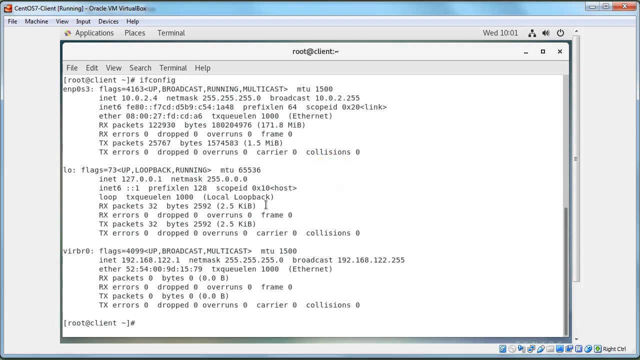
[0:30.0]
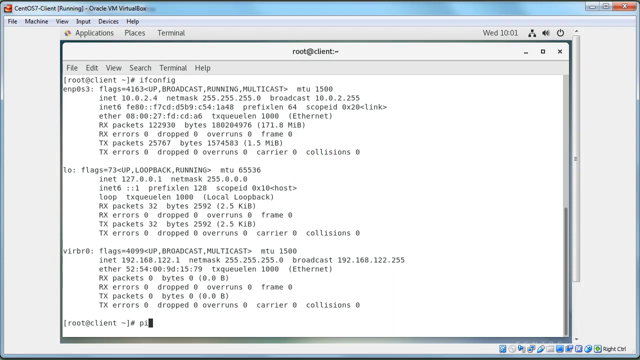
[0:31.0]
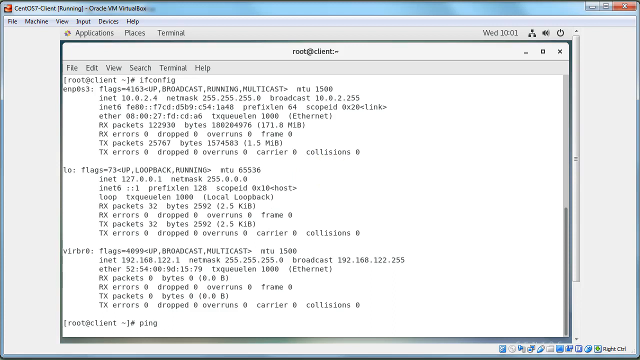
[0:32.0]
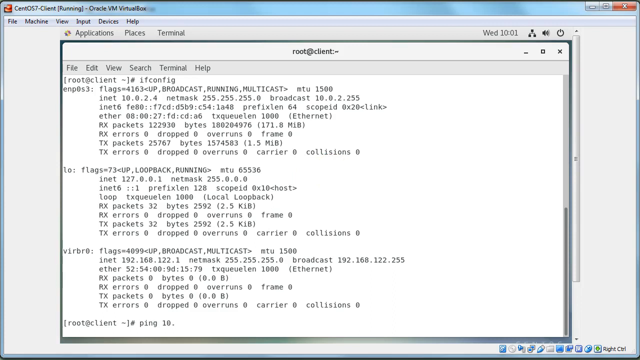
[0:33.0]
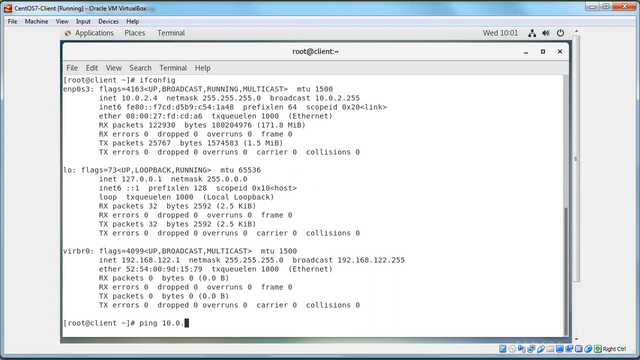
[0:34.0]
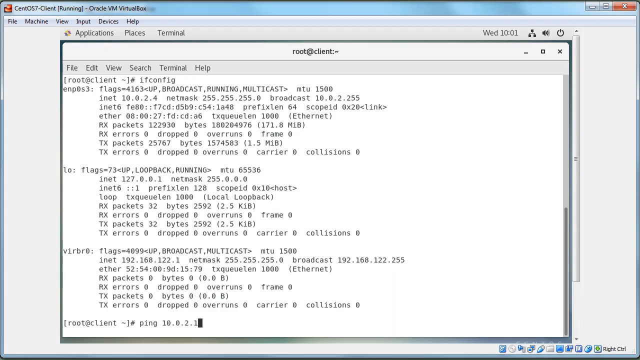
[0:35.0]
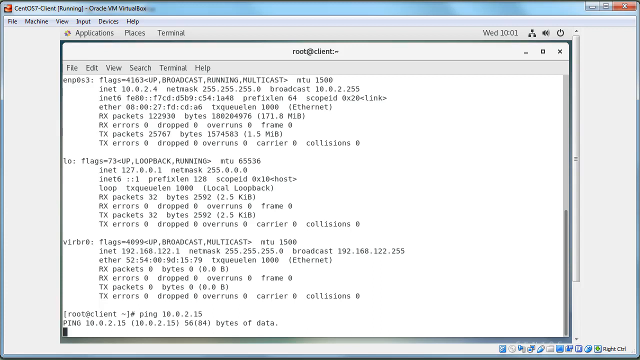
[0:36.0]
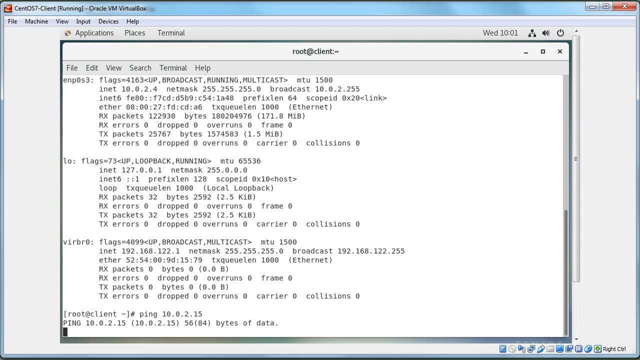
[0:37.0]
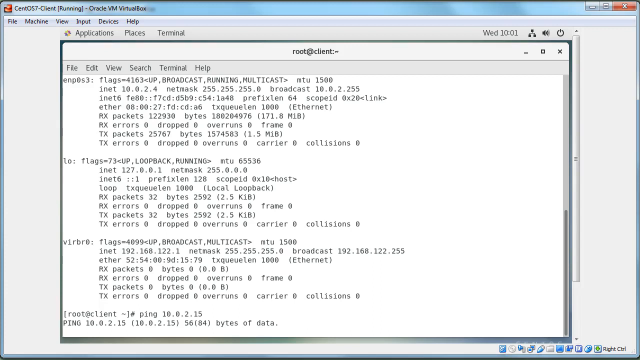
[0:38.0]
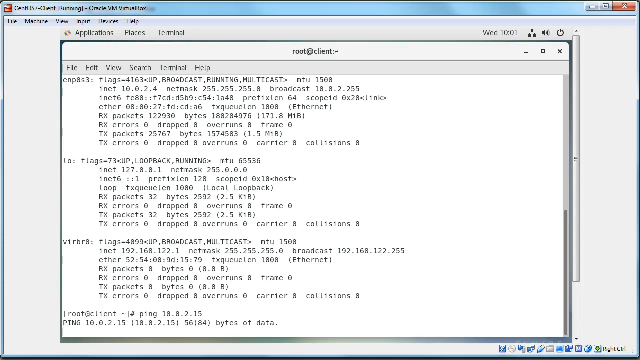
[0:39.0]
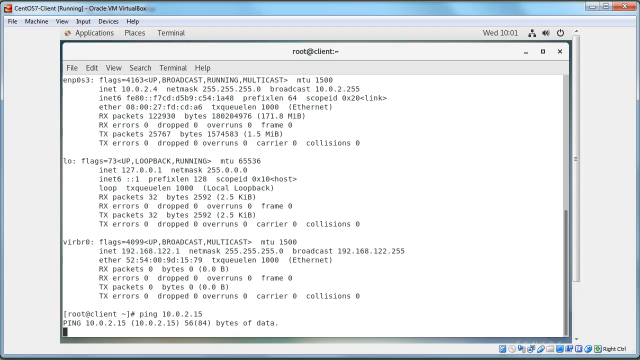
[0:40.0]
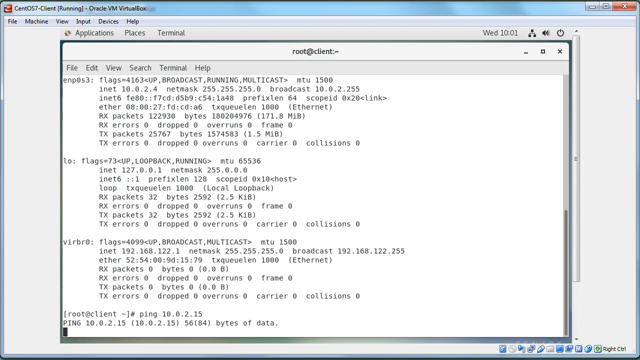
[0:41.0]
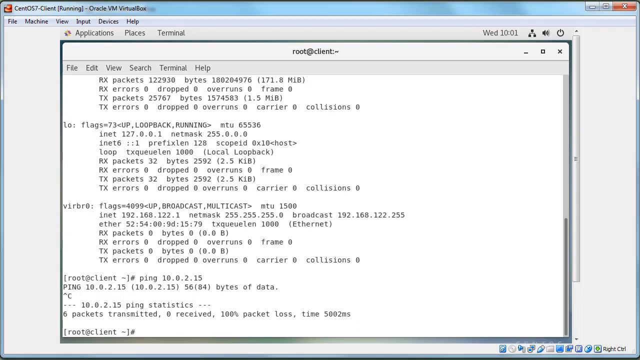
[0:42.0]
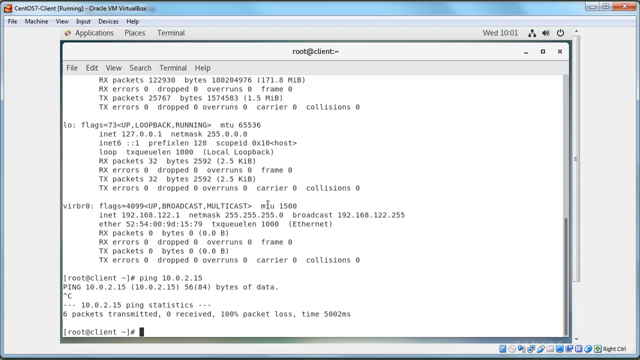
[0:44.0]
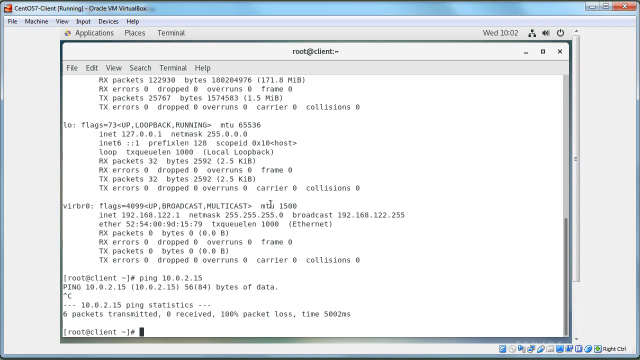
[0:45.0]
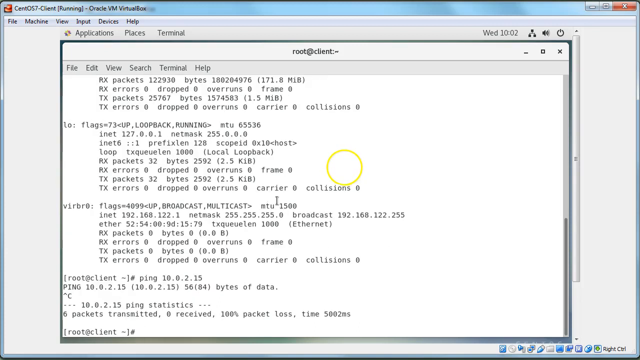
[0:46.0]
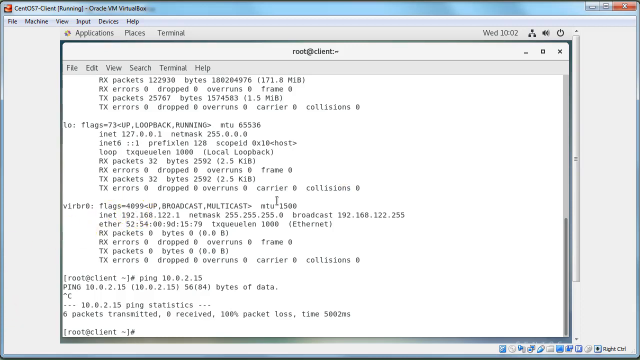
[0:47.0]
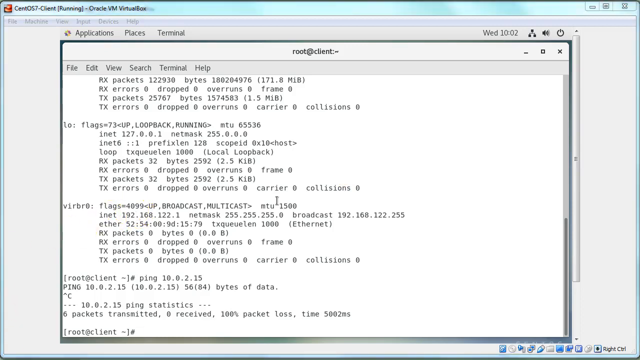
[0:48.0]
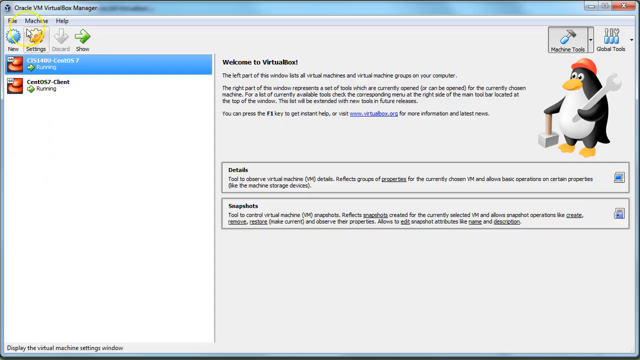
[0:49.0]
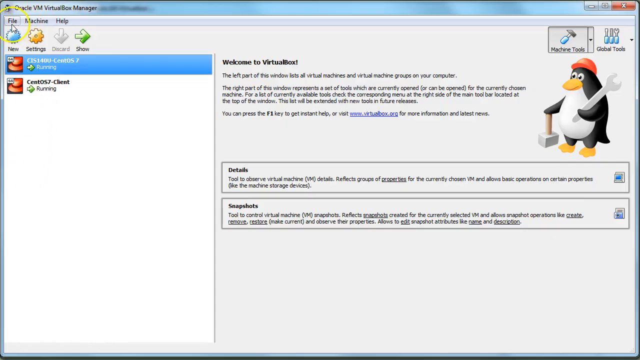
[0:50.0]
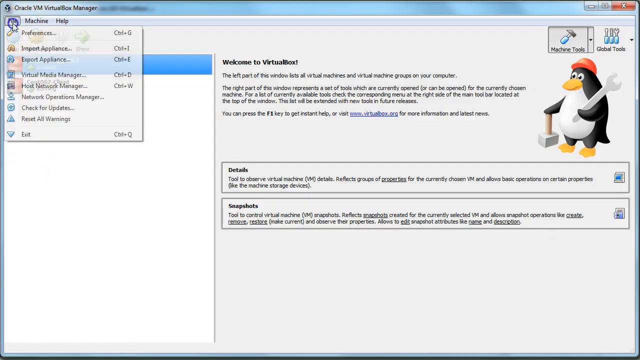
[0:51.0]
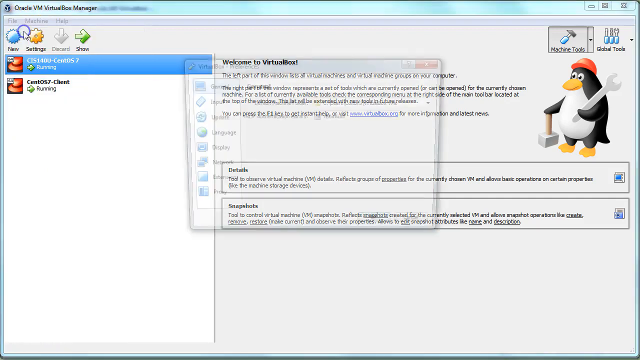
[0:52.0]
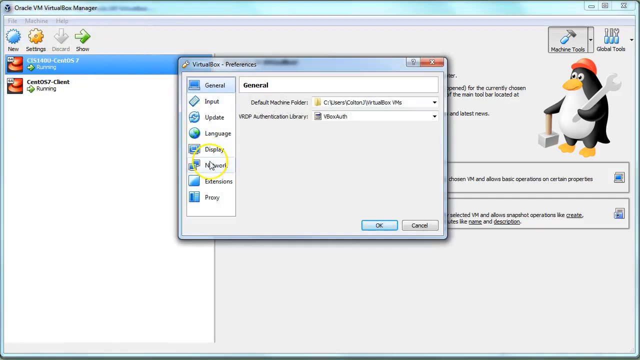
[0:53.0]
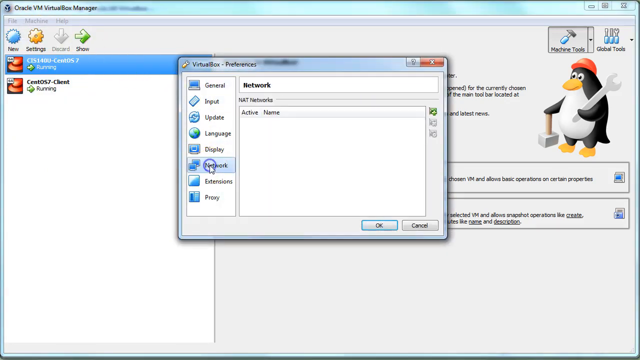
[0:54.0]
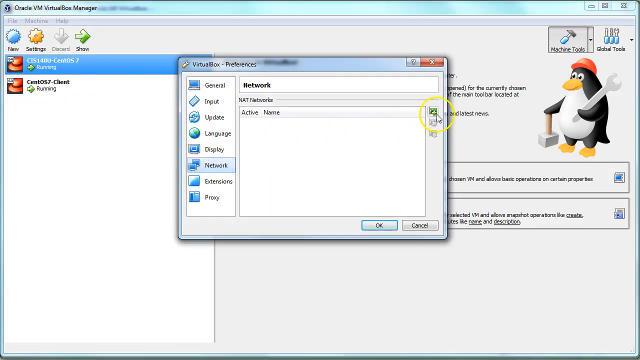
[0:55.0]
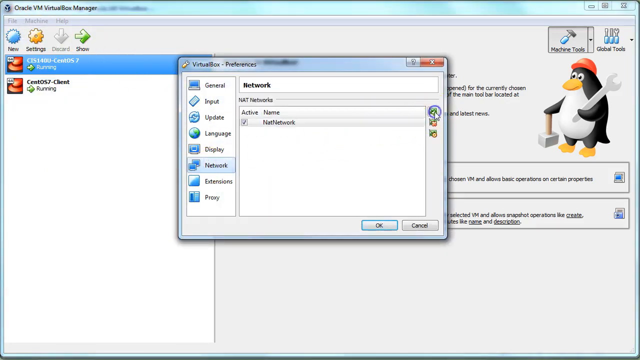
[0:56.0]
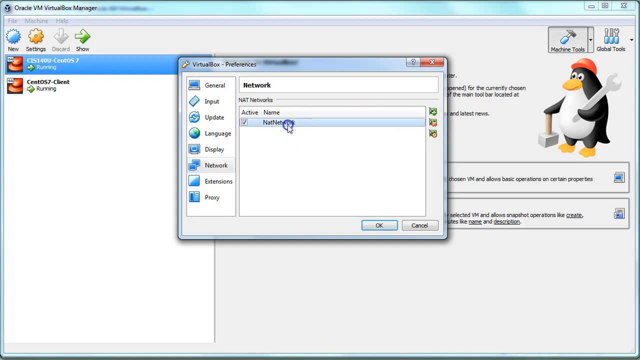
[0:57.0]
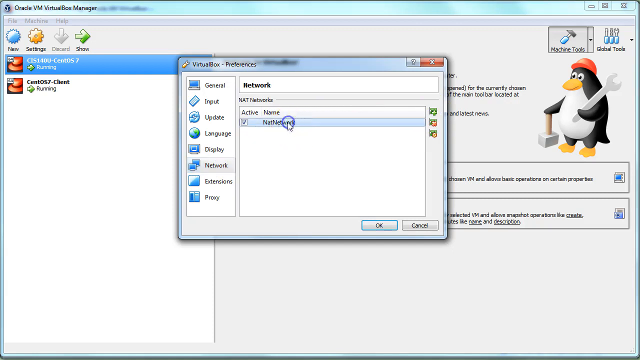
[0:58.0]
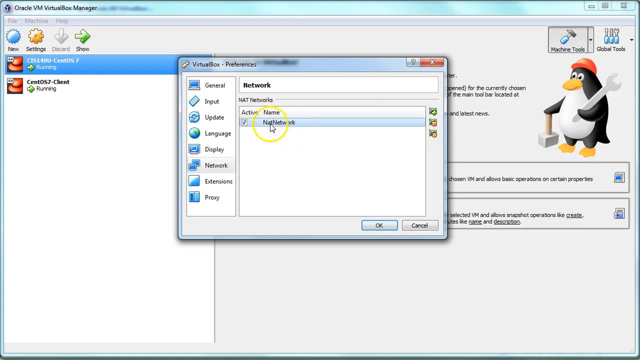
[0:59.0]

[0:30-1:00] A terminal for Oracle VM VirtualBox on one of his clients, which is running, is shown in a main window in the center of the screen for root at client. At the top of the terminal he has typed the command ifconfig, and underneath are three separate long paragraphs of text showing the different flags and information about the config. At the bottom he types another command, ping 10.0.2.15, and the terminal displays ping 10.0.2.15, the same address in parentheses, and then 56(84) bytes of data. He then types up arrow C, which shows the ping statistics: six packets transmitted, zero received, 100% packet loss, time 5002 ms. His mouse moves to the middle and then the left of the screen, with a yellow box over it as it moves. He then switches to the main VirtualBox window, which shows the Welcome to VirtualBox text on the right and the panel of his VMs on the left. He clicks the File tab at the top right of the screen, opening a dropdown, and selects Preferences. A pop-up appears showing the VirtualBox preferences menu with a panel of different preferences on the left; he clicks Network, then clicks the plus button at the very right to add a network, and clicks on the new network that appears.